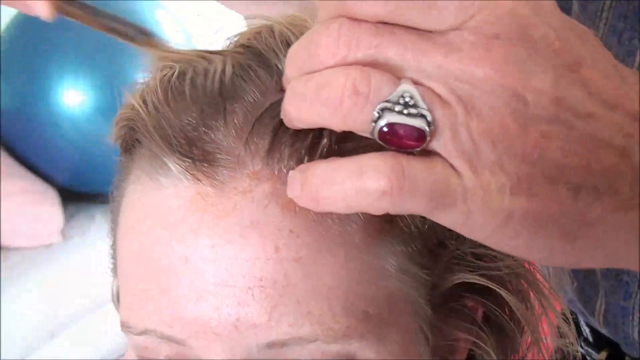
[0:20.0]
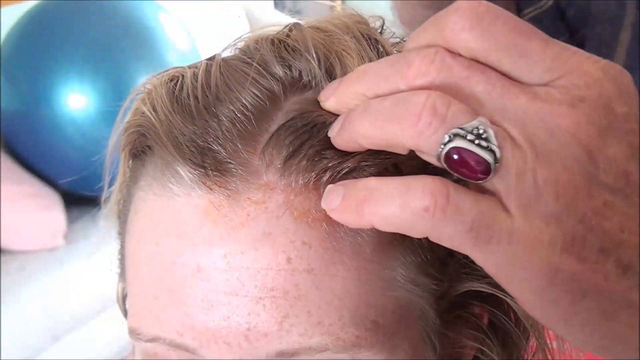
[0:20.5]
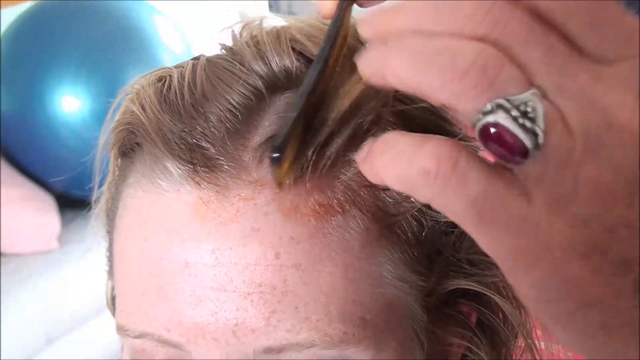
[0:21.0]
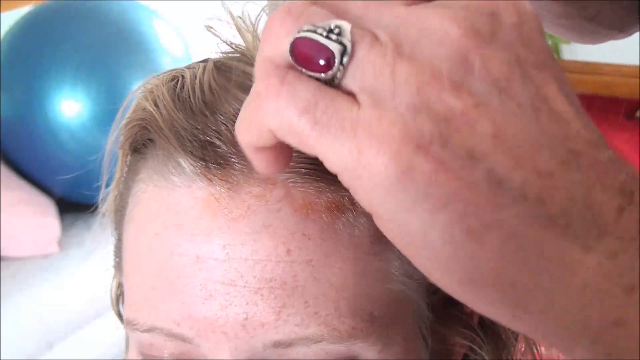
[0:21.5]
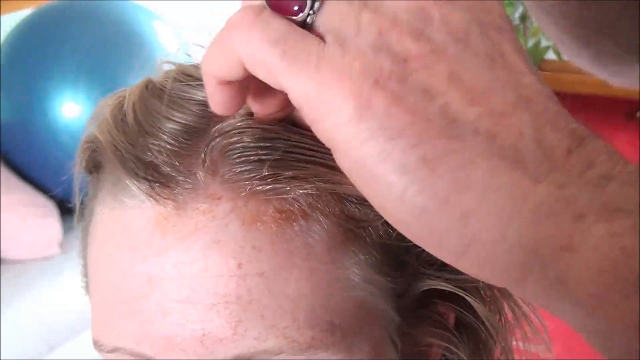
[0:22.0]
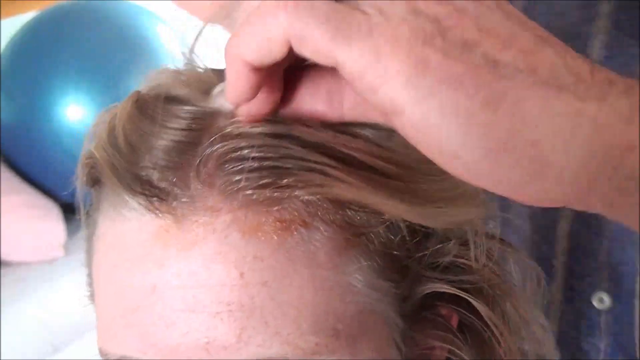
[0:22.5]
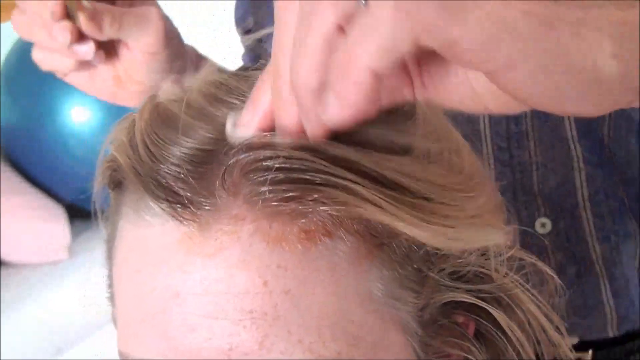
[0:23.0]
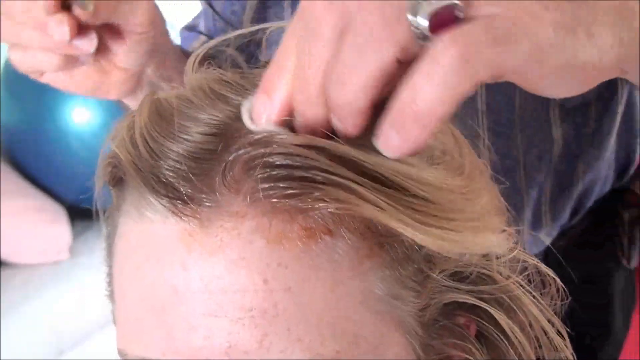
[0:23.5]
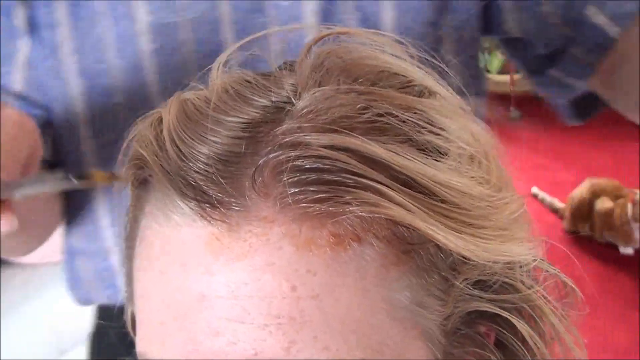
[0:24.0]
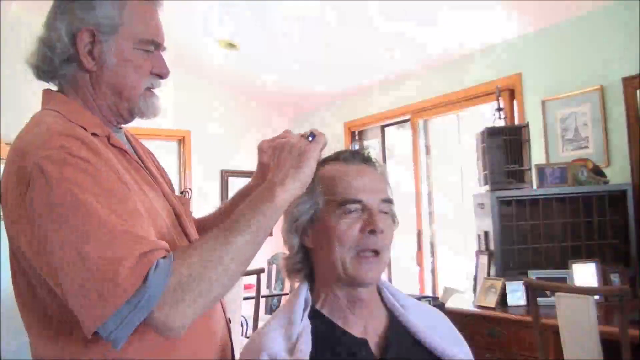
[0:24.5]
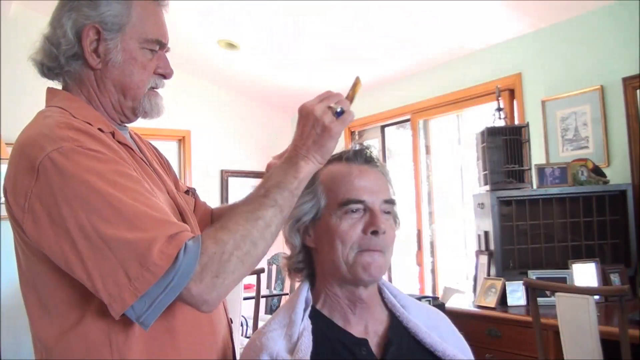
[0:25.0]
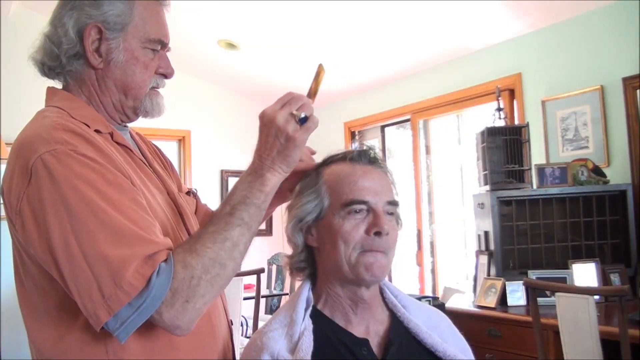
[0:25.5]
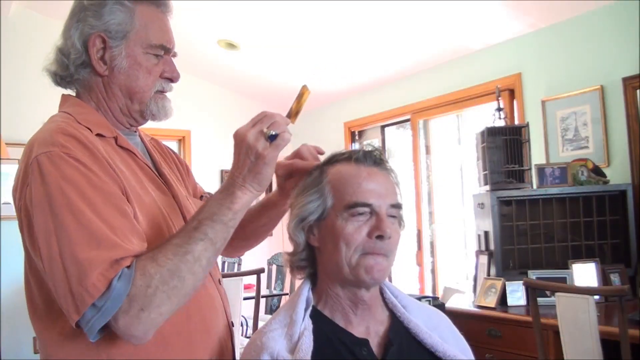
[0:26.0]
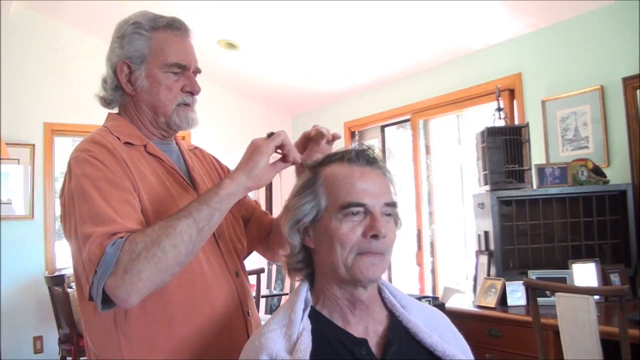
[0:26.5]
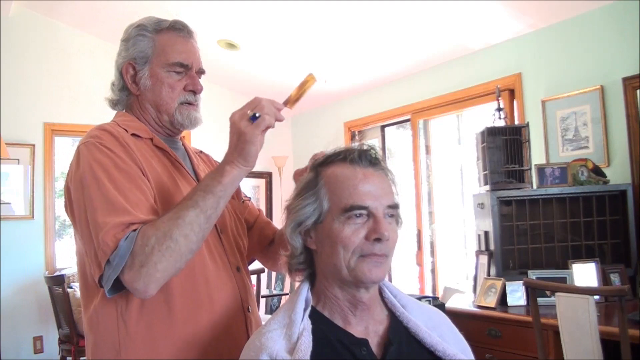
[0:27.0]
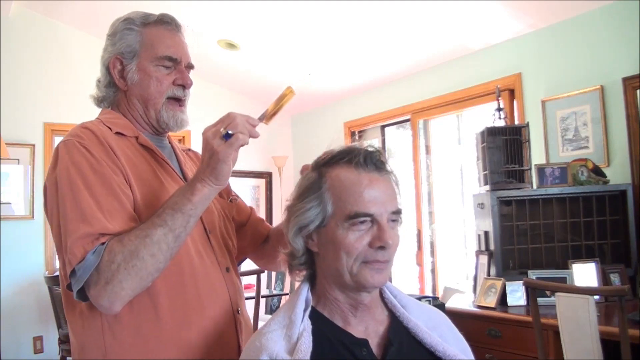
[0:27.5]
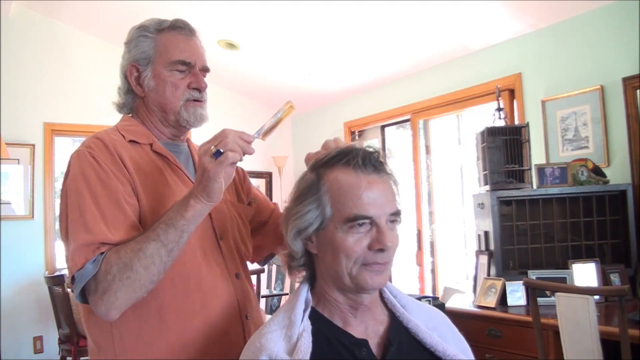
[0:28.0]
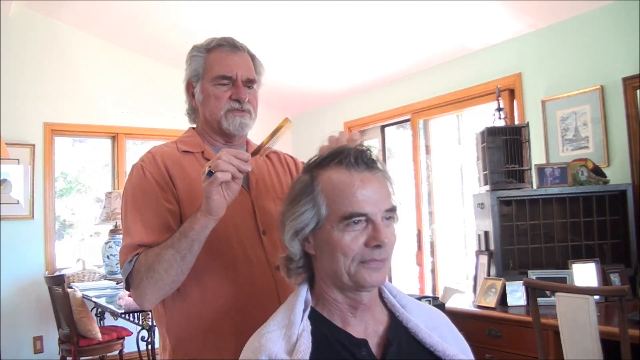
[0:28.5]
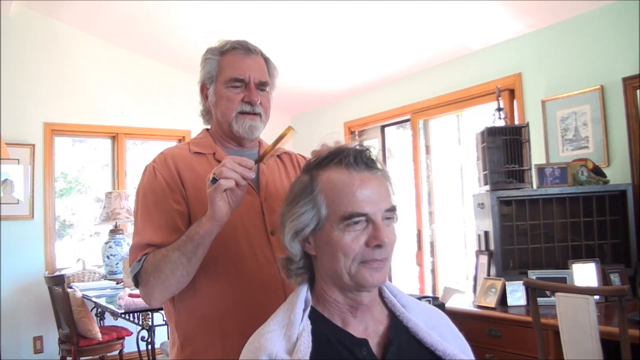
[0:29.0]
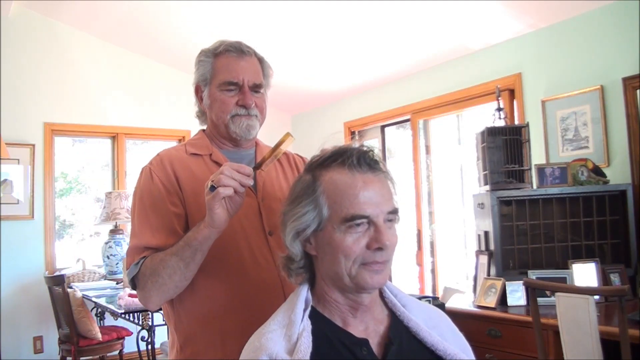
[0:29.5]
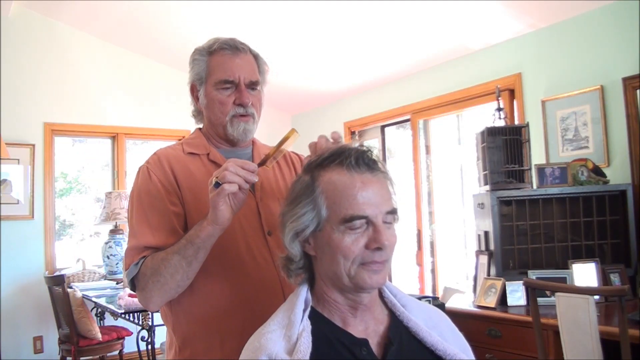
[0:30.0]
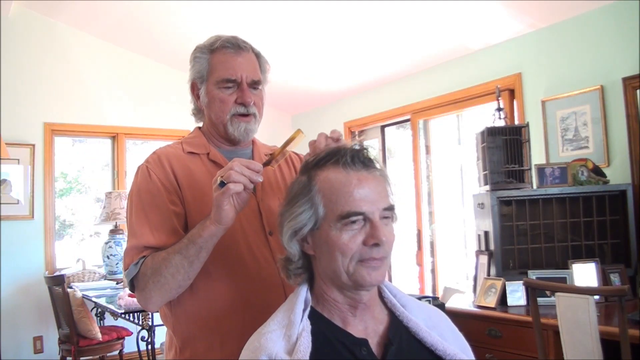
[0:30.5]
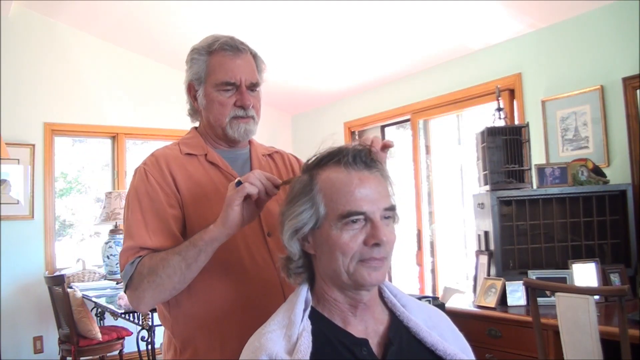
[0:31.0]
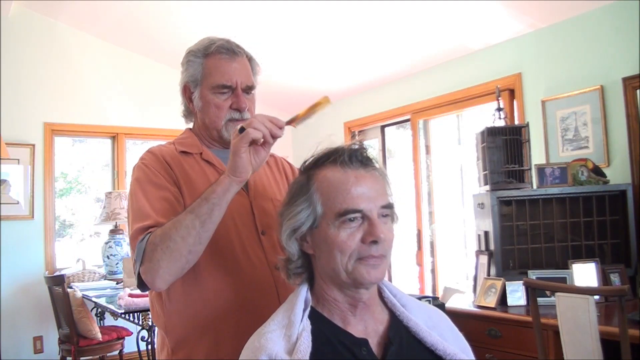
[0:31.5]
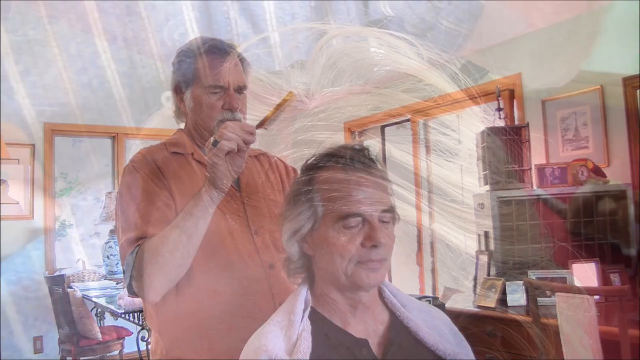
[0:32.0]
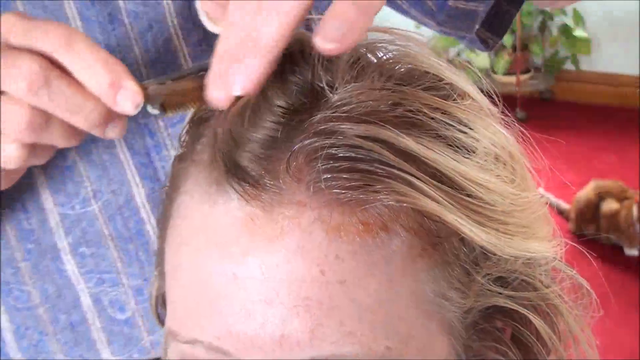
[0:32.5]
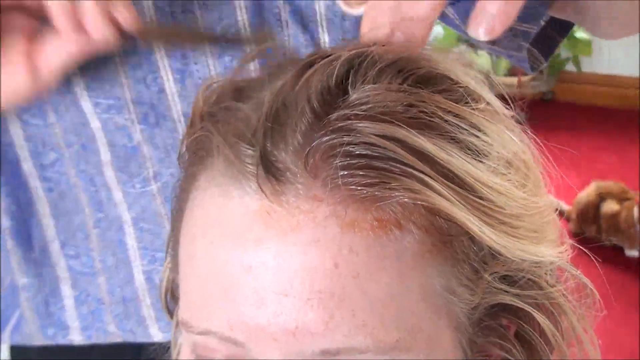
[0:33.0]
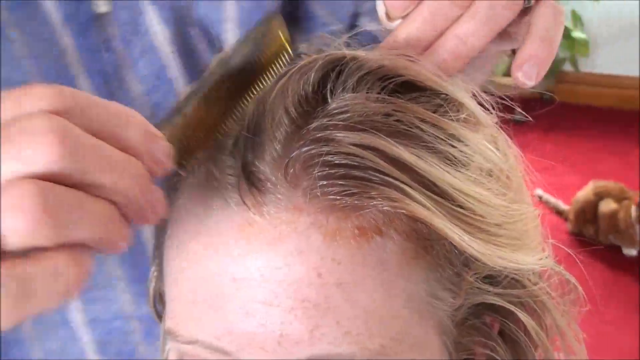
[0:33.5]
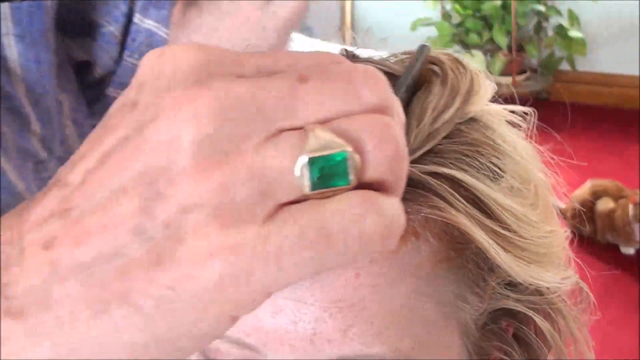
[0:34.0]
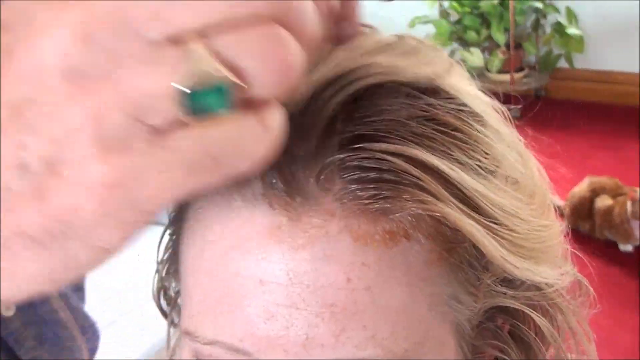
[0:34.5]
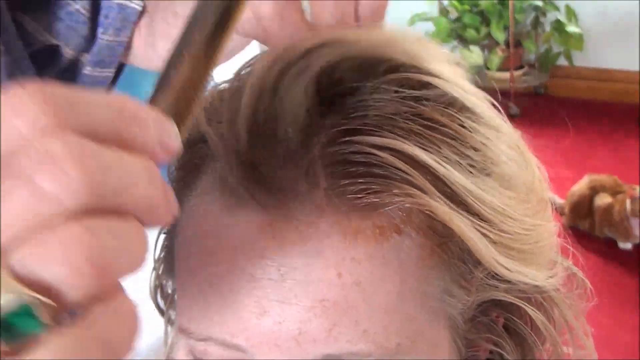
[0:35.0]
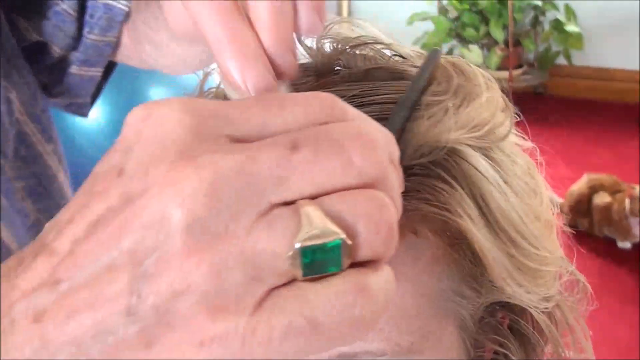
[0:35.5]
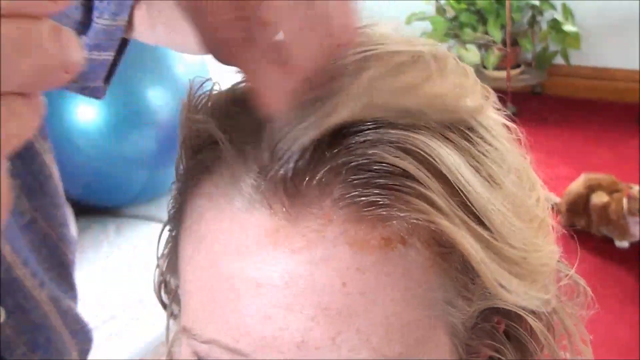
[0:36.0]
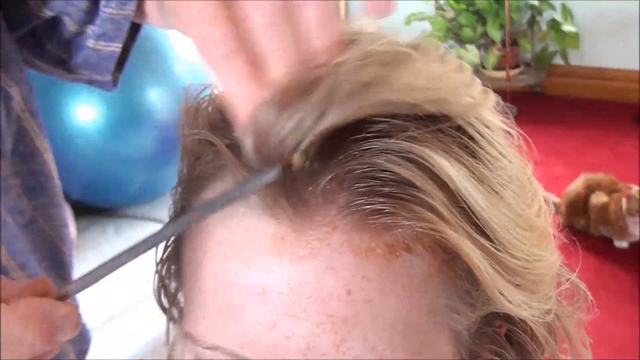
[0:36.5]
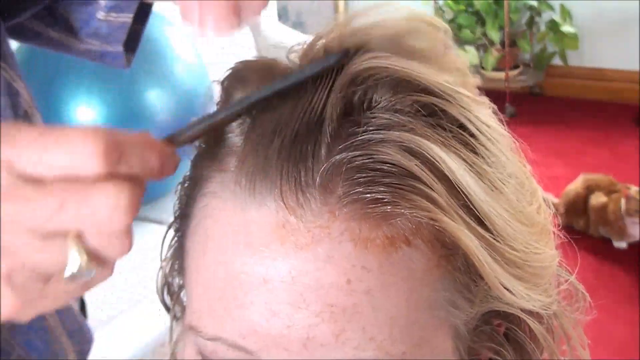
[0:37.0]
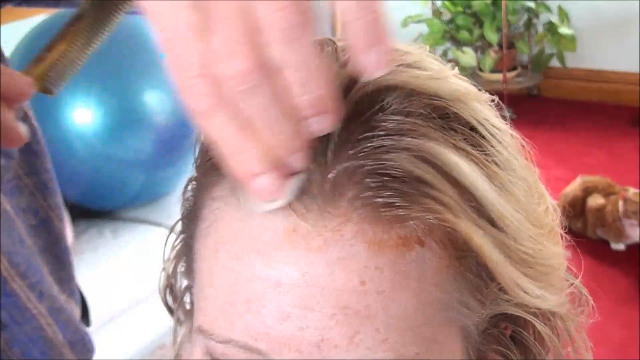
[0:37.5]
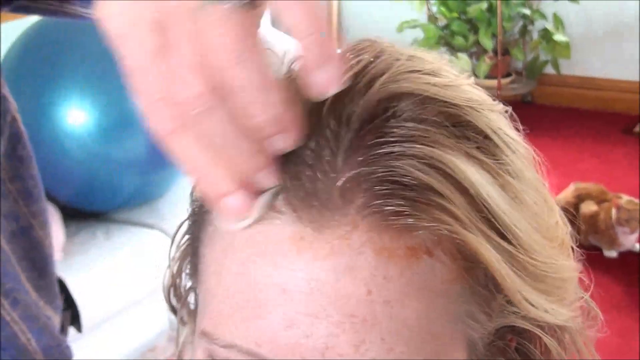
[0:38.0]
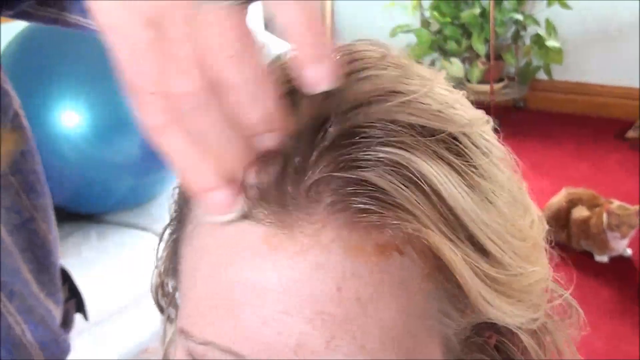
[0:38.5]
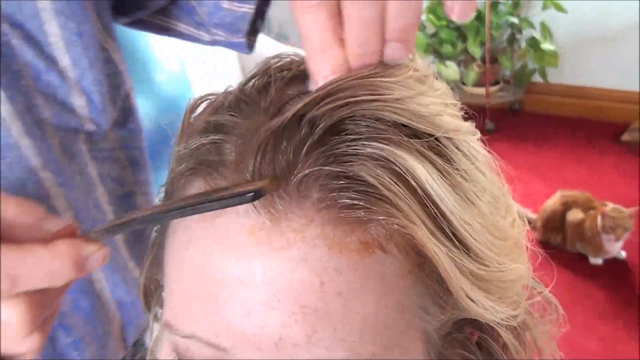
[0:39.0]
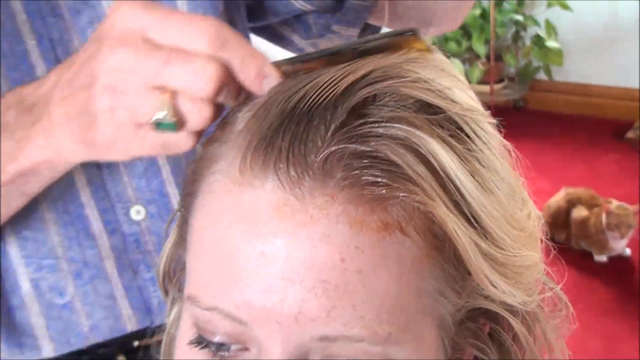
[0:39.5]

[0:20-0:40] A tight shot shows a person's head from the forehead up. A hand is in the hair, manipulating it. The left hand wears a ring with a silver body and a ruby-type stone, with some sort of design that looks perhaps like a flower. A bit of a comb or some sort of hair implement is visible in the right hand. The hair is parted and rubbed with some sort of padding, like a cotton ball perhaps, as it is combed: he parts it, rubs where he parted, then moves over and parts again. This looks to be some sort of process, perhaps for hair growth or thickening. The stylist is perhaps in a home. Two windows are visible, and there are five photos on a table. On top of the table is some sort of item that looks like it has 36 slots and metal sides, with a photo and a clock on top of it. A picture hangs on the wall. On the left side of the screen is another table that appears to be glass with an iron base, with a chair at it. The chair appears to be cherry-type wood, with a red pillow on the seat and a yellow or tan pillow on the back. On the table is a lamp that appears to be glass. A cat is on the floor.